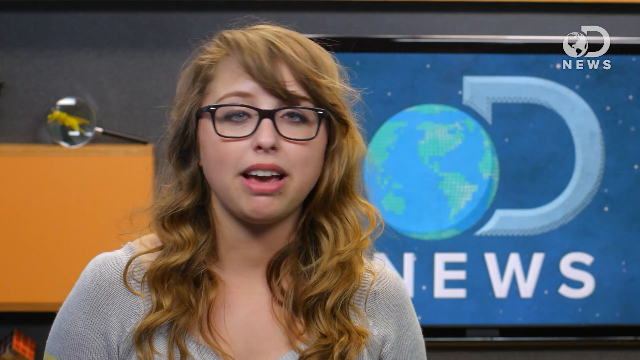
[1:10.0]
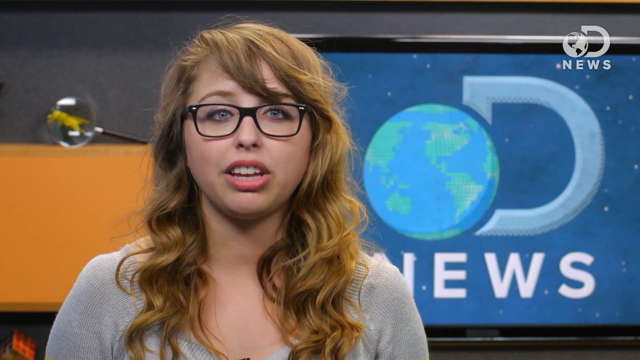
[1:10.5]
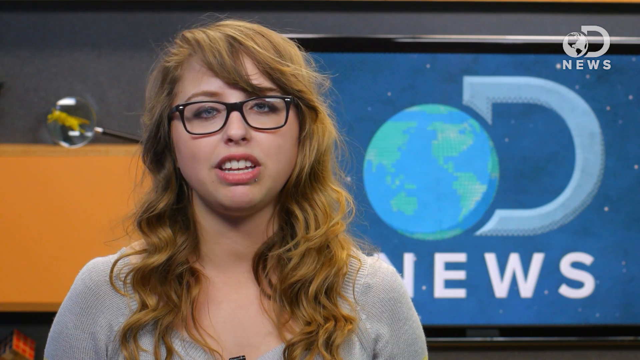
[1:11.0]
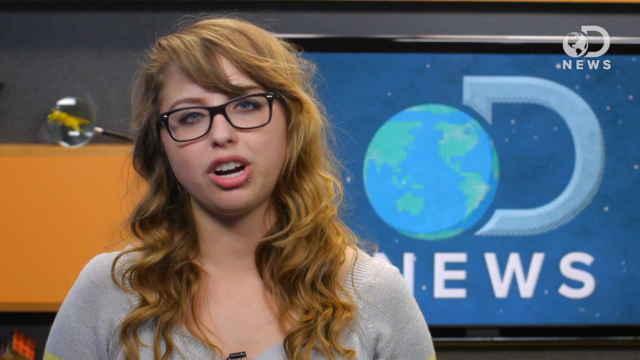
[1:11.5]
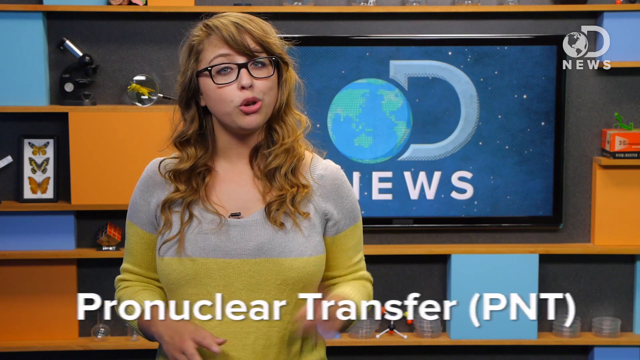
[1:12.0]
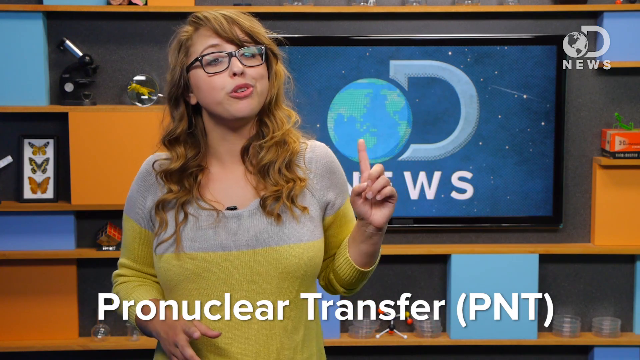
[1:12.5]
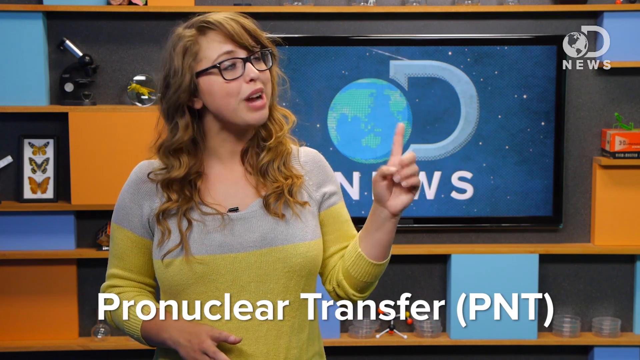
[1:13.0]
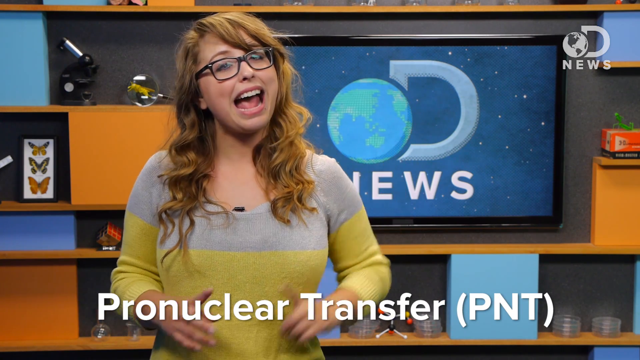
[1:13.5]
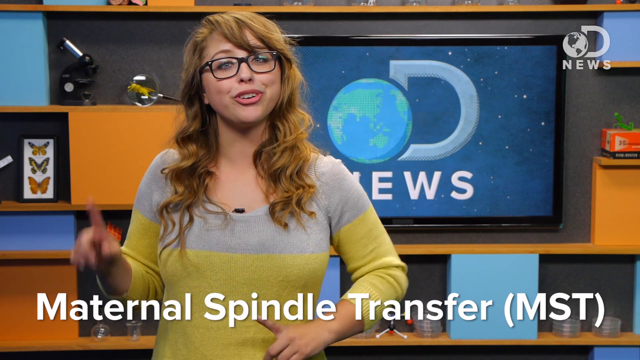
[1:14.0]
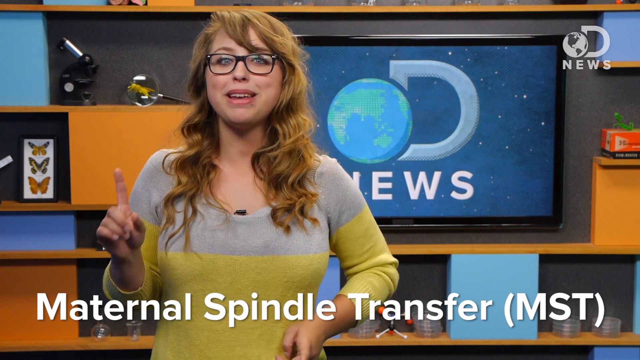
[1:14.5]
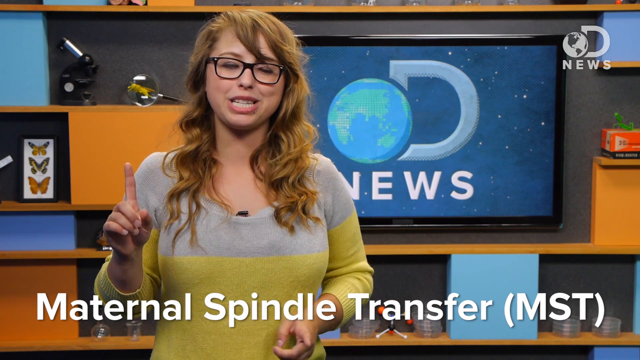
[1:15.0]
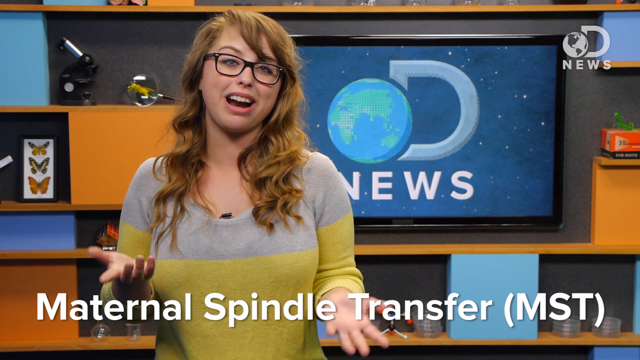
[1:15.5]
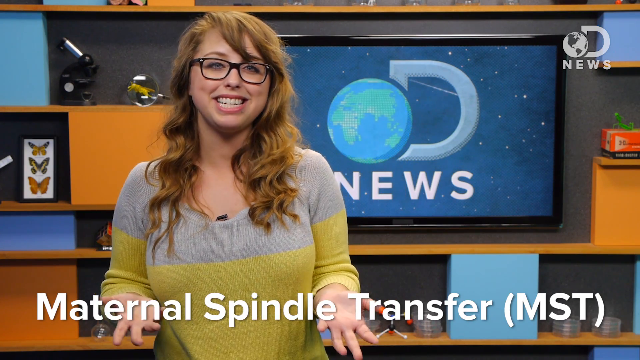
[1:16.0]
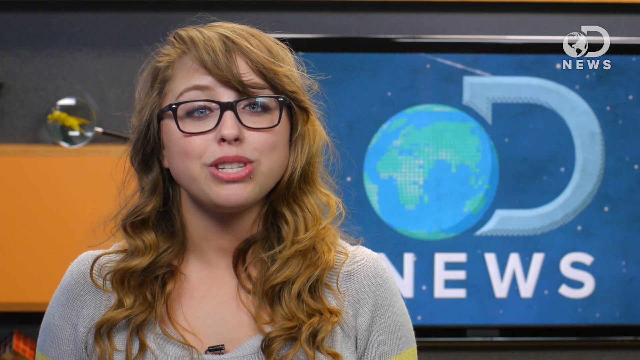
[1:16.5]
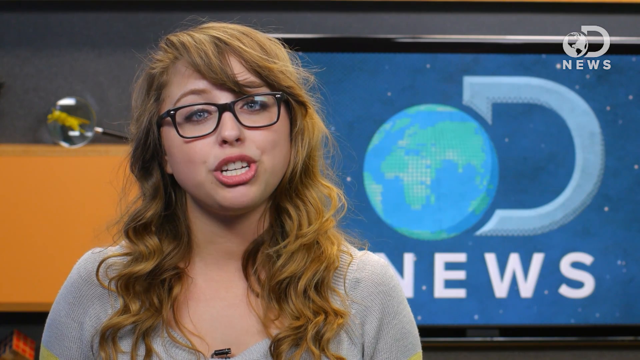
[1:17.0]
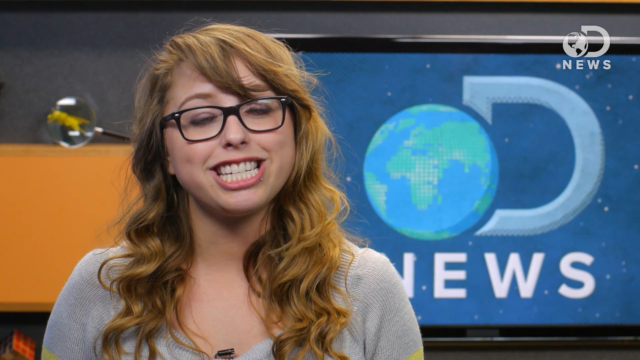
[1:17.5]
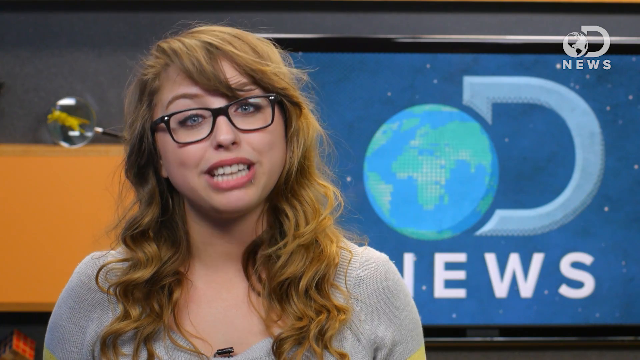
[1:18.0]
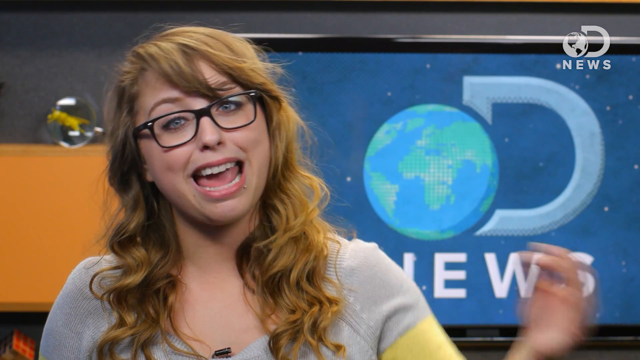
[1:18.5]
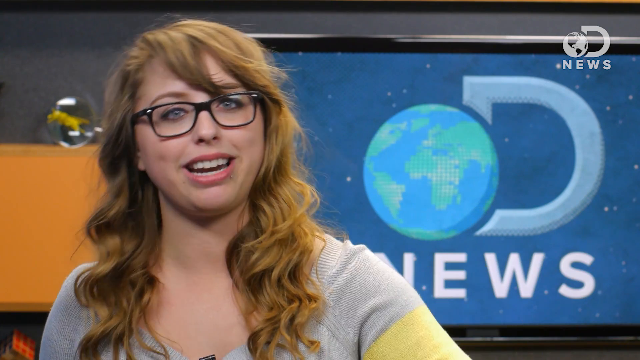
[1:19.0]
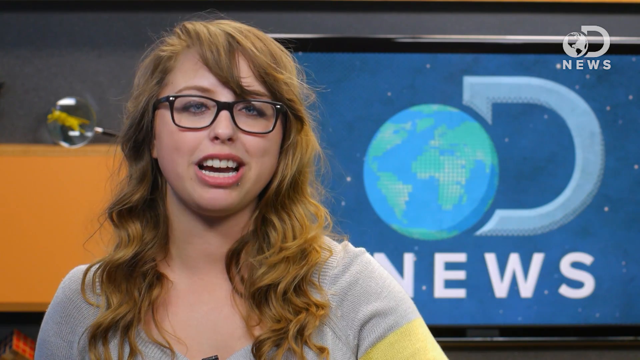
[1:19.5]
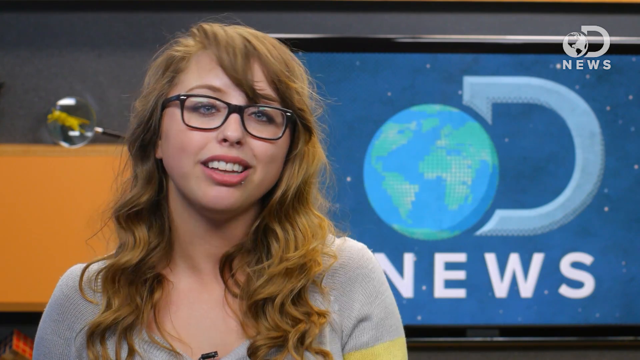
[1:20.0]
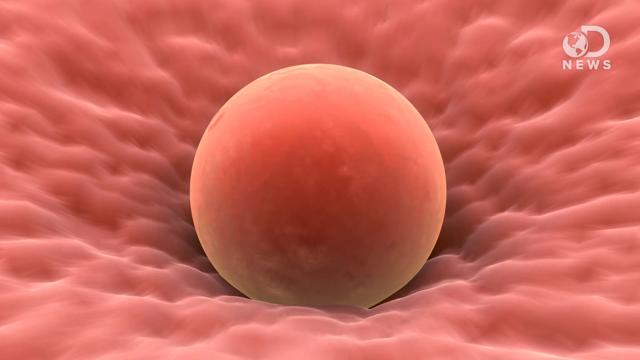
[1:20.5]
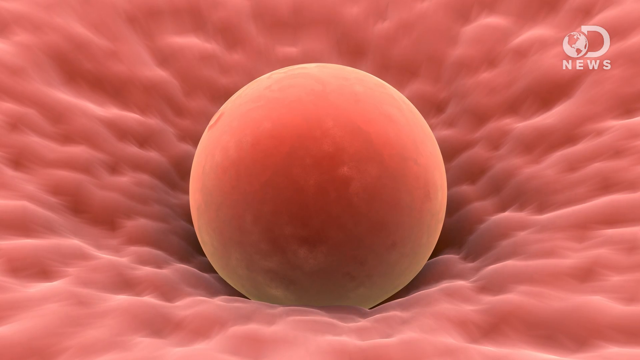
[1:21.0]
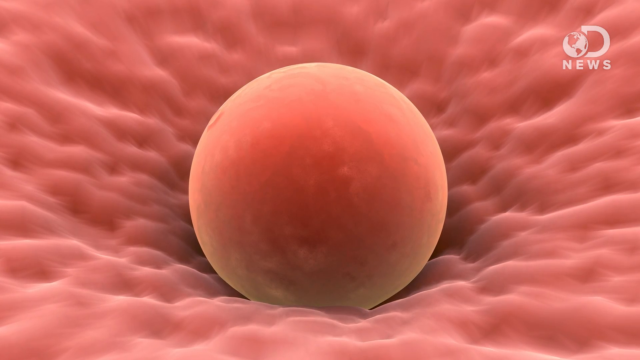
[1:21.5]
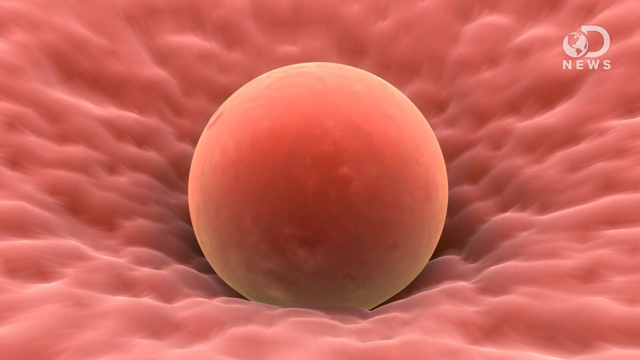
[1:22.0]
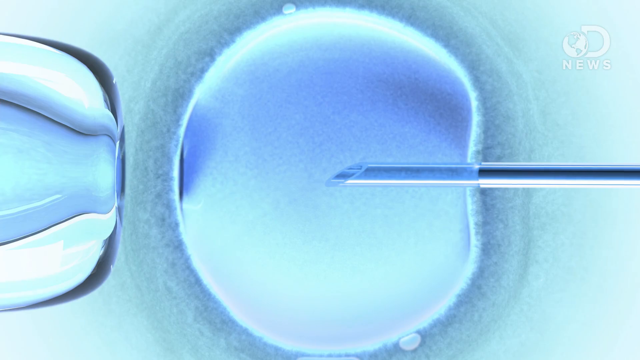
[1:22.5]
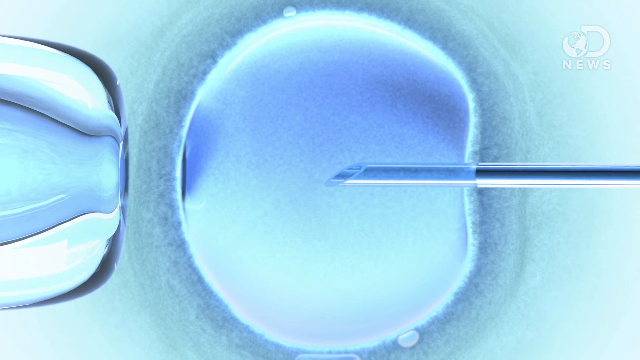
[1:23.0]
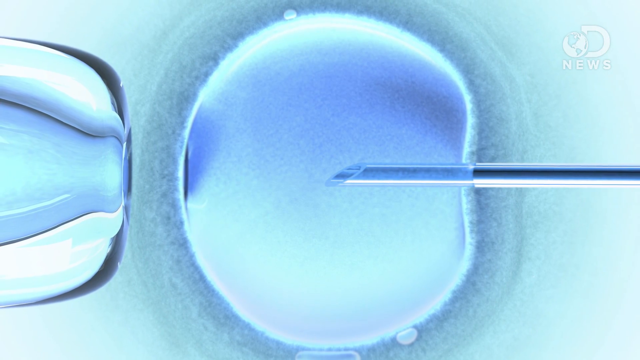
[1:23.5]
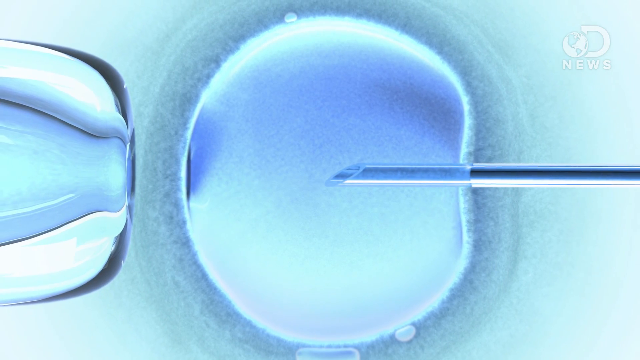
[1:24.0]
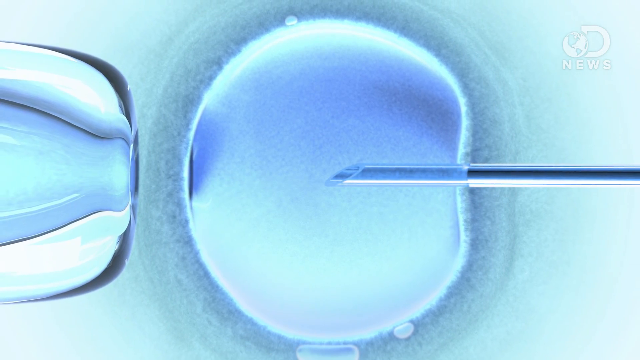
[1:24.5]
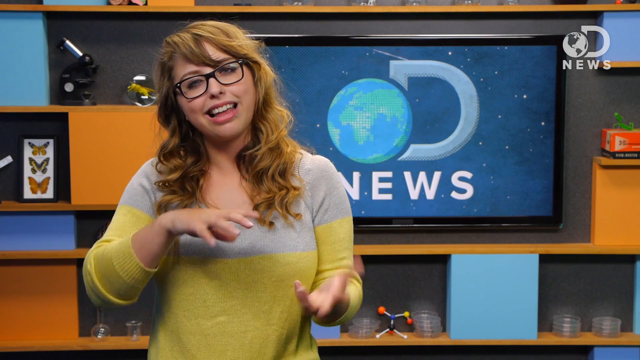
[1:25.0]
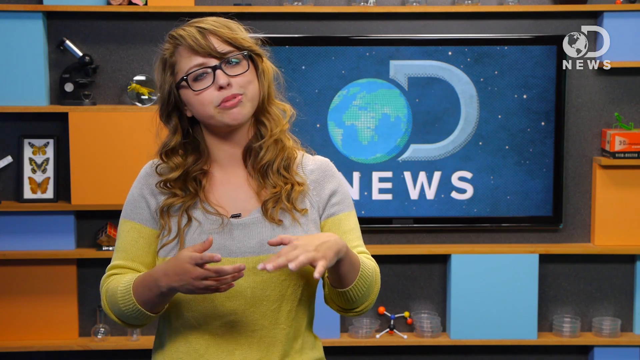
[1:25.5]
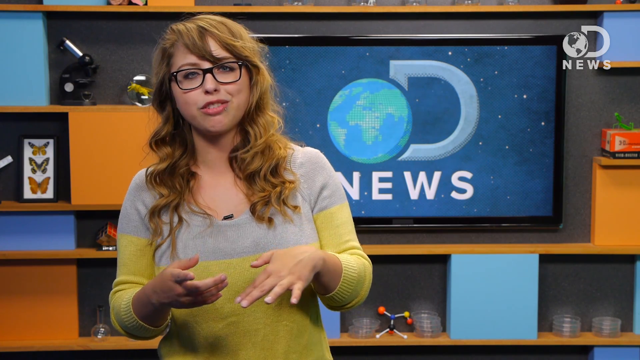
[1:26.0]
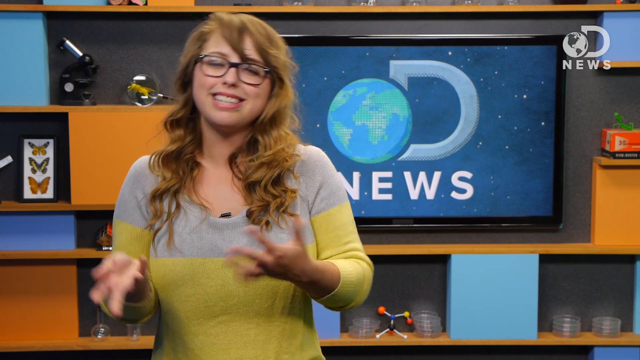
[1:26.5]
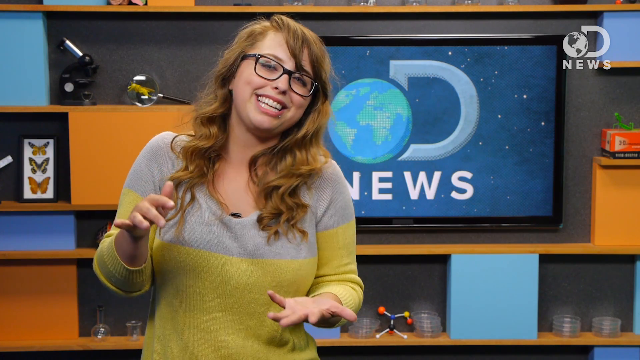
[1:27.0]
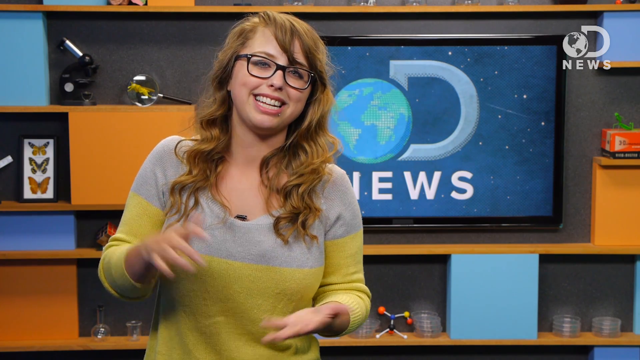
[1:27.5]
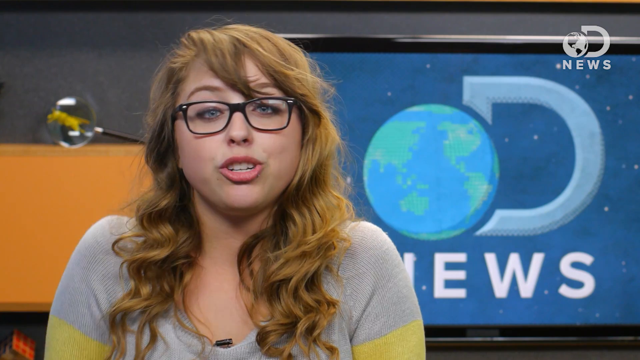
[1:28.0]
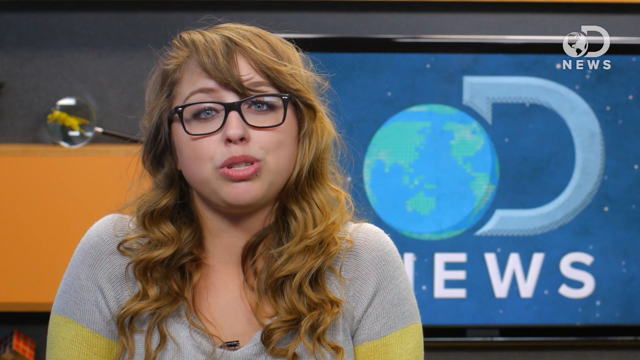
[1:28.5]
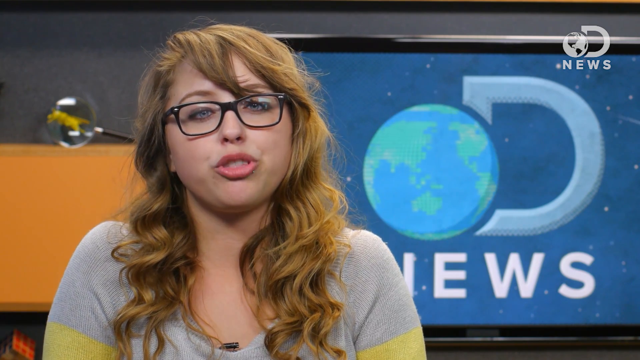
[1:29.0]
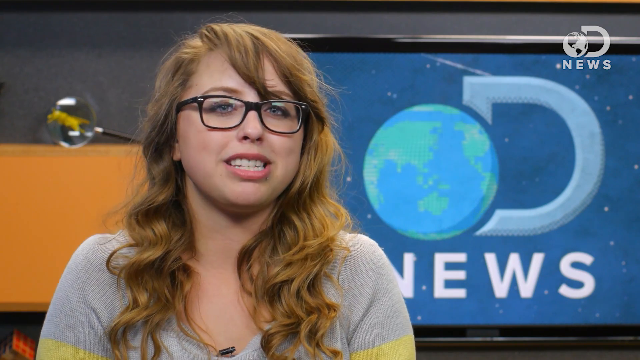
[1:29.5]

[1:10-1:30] The scientific news reporter, Lori, talks to the audience on camera in the same setting, with an OD News logo behind her and scientific items such as a microscope. She uses her hands expressively. The phrase "Pro Nuclear Transfer (PNT)" displays in white at the bottom of the screen, followed by the words "Maternal SpindleTransfer (MST)." She continues talking, using her fingers. The background shows a classroom with butterflies in a case, the chalkboard, the news logo, lab equipment such as a microscope, and a plastic DNA model on the table. Next comes what looks like a pink round sphere, apparently an egg in the fallopian tube, probably showing how babies are created; the round egg sits on top of a light, fluffy, pink, cloudy area that apparently represents the fallopian tube. The next graphic is blue-shaded, with a tool being inserted into a blue liquid gel; the tool seems to inject into the egg area. She then continues to talk.